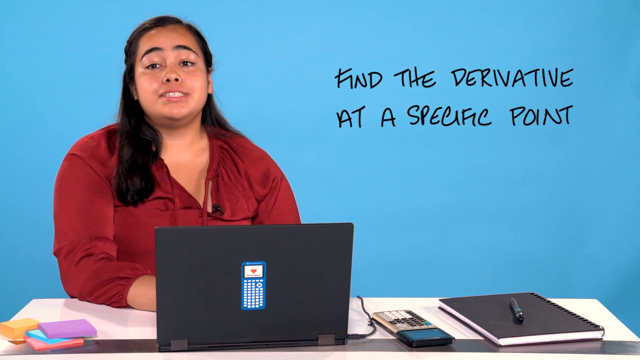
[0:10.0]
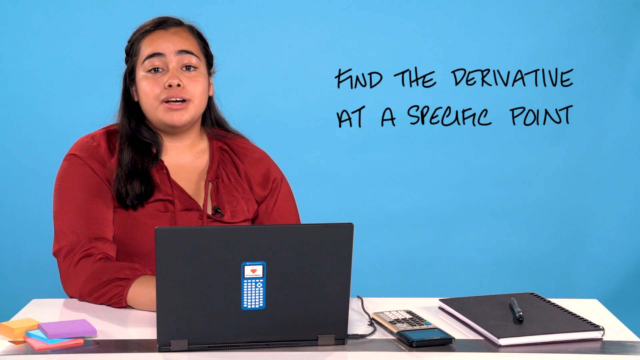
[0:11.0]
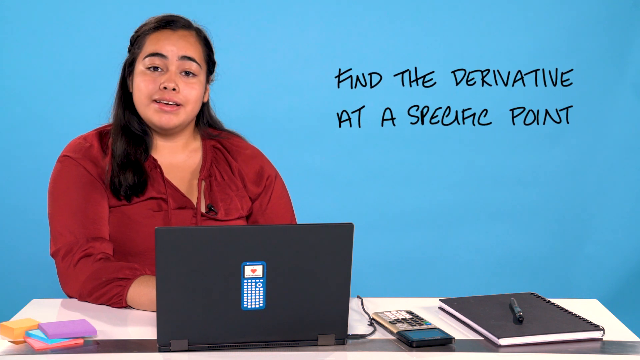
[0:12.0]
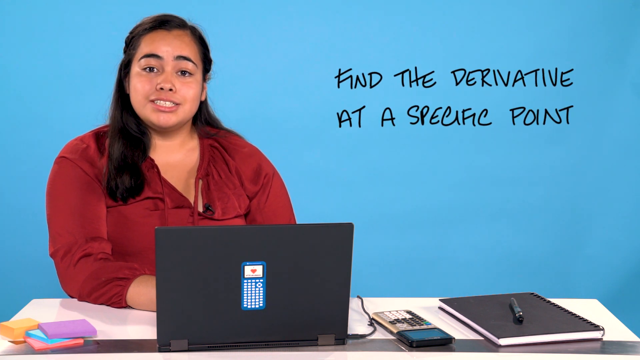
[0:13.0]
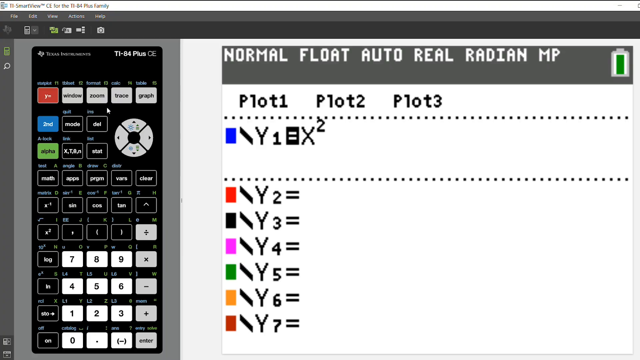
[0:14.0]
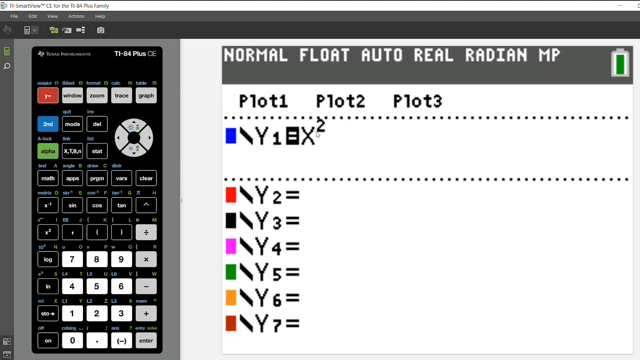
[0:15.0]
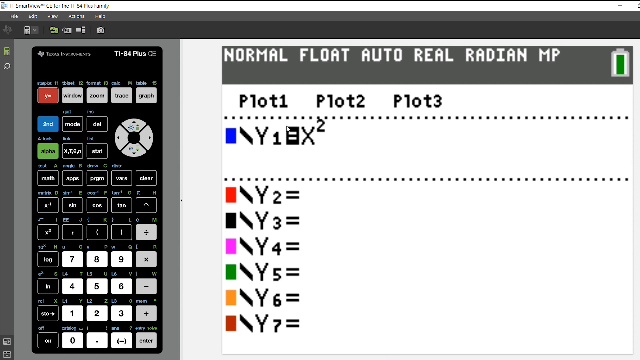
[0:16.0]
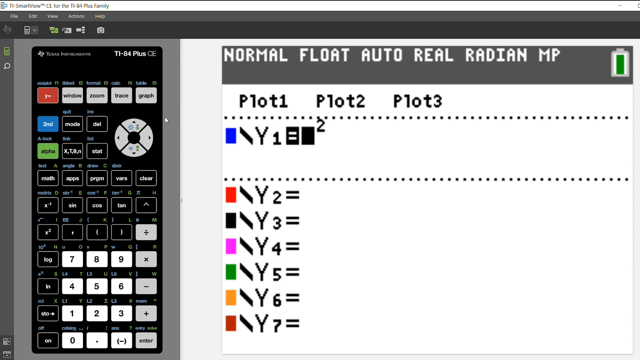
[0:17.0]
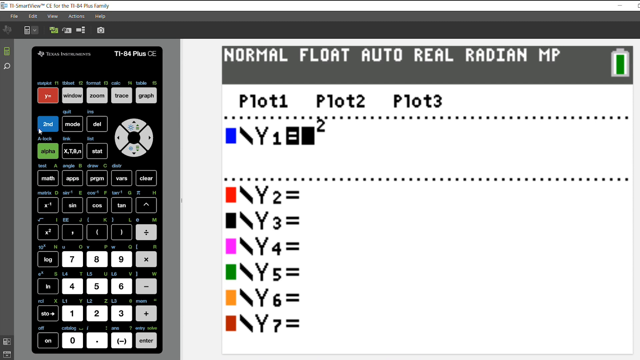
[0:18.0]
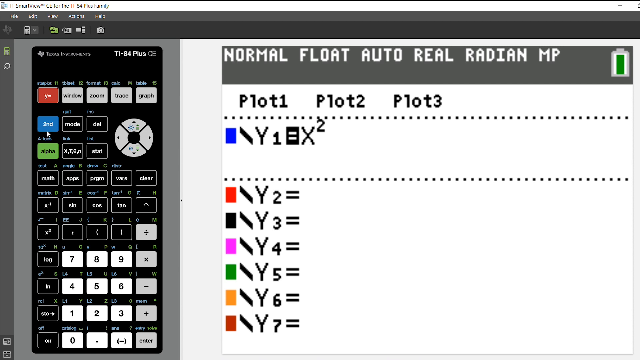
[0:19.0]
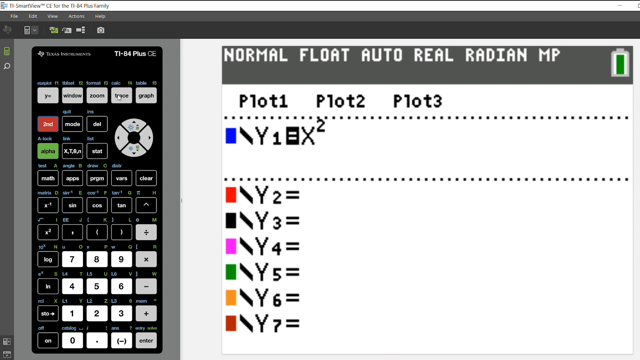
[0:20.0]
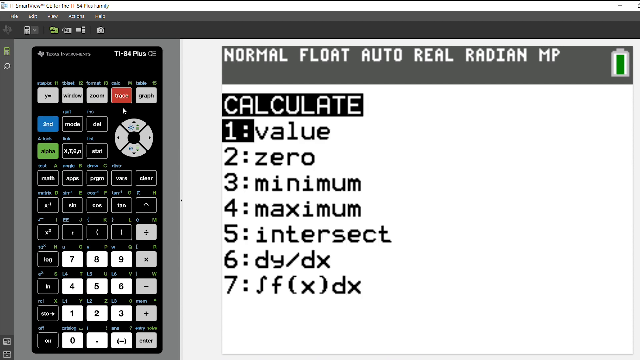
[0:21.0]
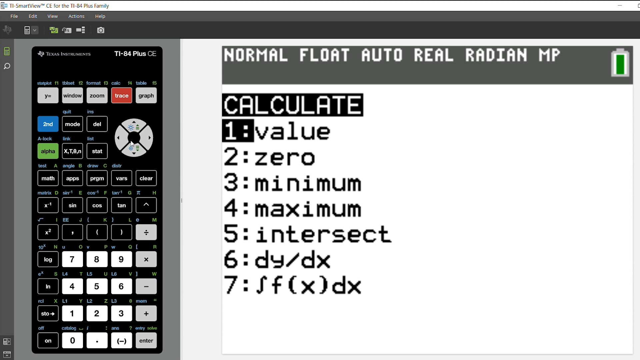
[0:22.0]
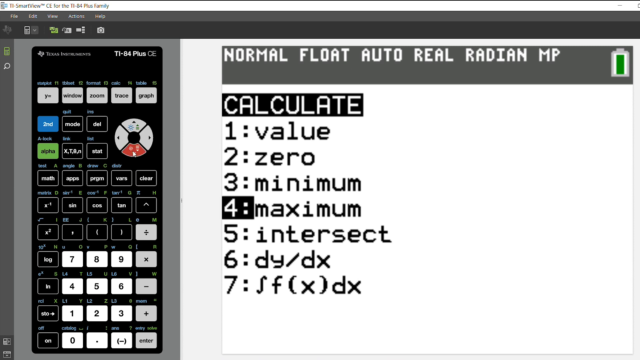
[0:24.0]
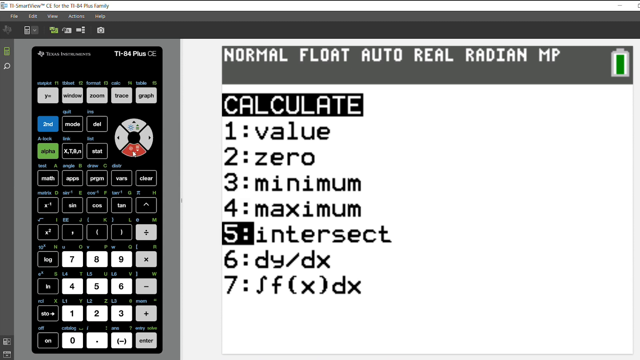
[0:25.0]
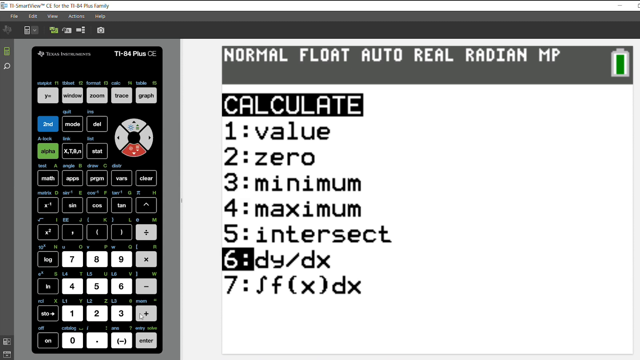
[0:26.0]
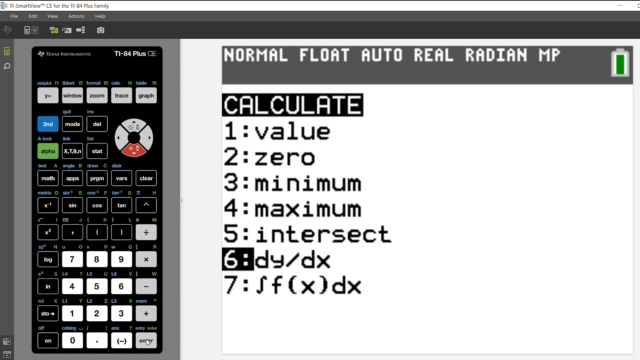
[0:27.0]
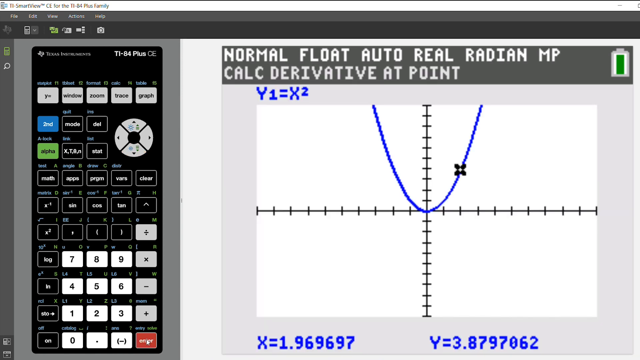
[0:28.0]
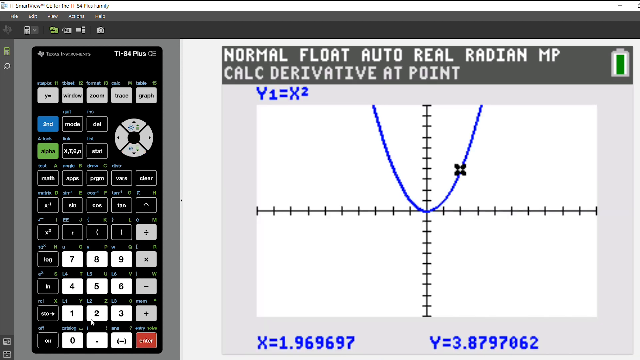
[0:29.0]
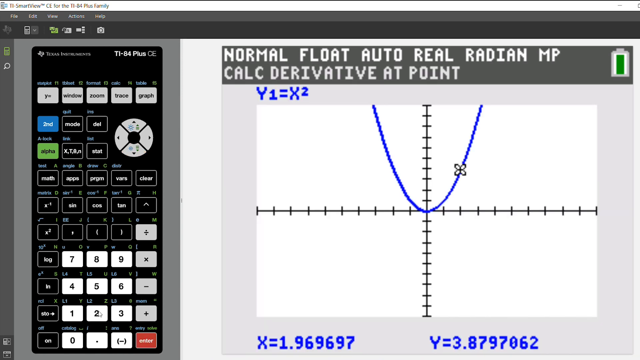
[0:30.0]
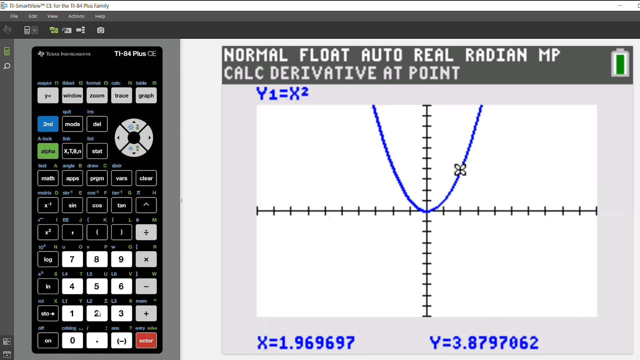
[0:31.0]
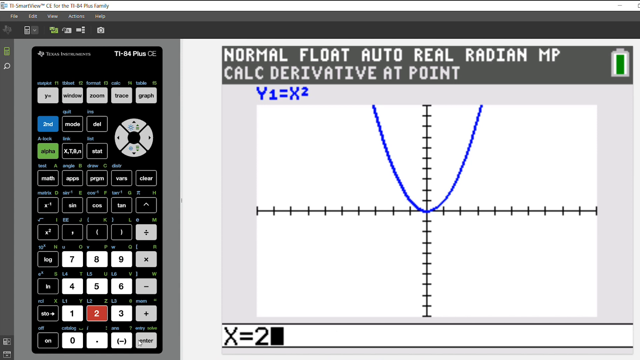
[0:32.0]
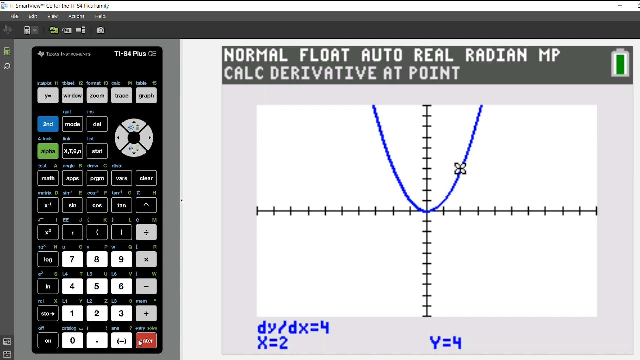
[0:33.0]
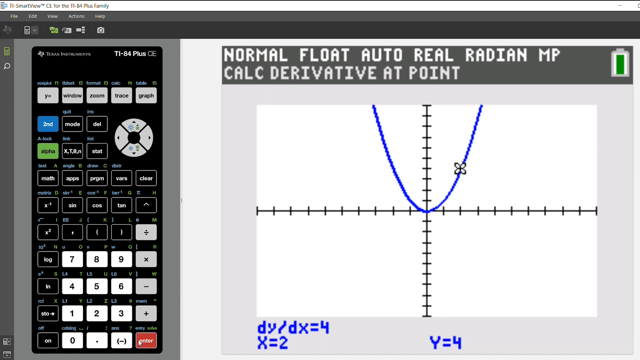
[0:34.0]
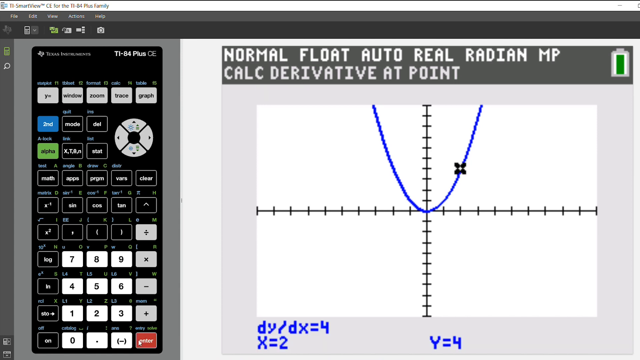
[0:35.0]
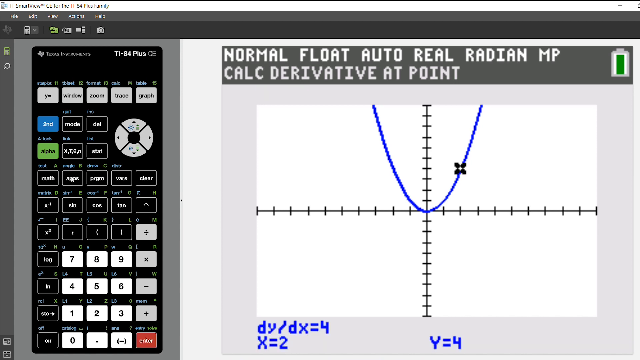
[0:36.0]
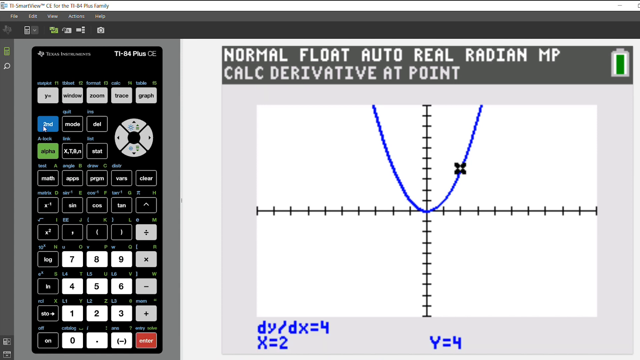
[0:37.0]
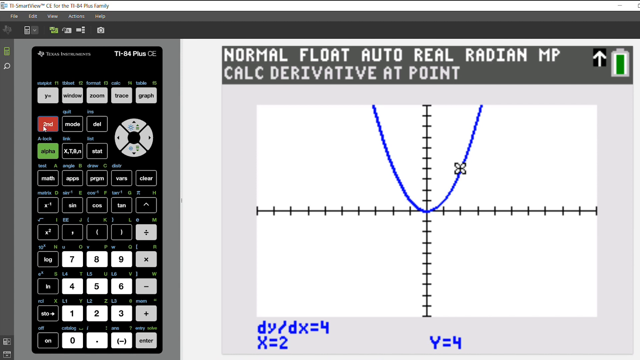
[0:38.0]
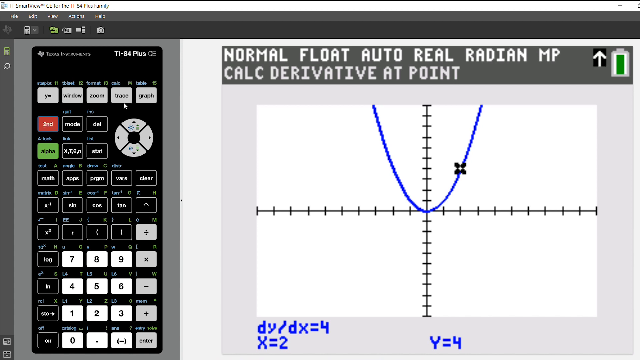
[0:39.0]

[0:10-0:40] One person, a woman, is in the video. The scene changes from her to a calculator, with calculations on the right-hand side and a black-and-white graph with a blue line on a white background. On-screen text reads "find the derivative of specific point." The woman has an open laptop in front of her with a calculator at the back, and another calculator on the right-hand side of her table. The calculations seem complicated, including terms like normal float, real, radian and MP. A book is next to her. She appears to be in her early 30s and has a light complexion and brown hair.